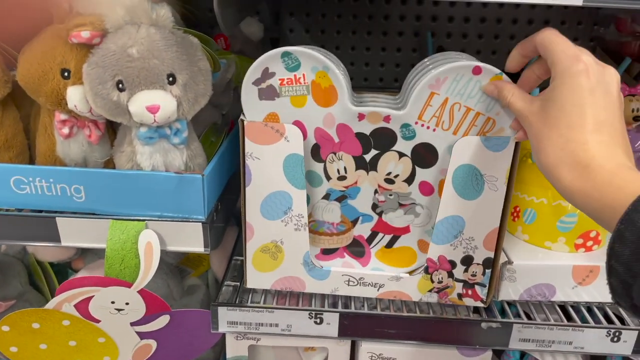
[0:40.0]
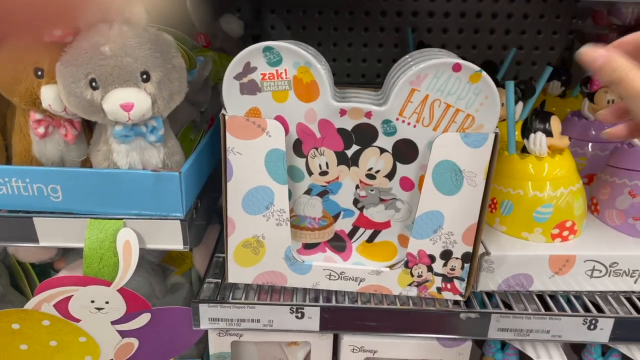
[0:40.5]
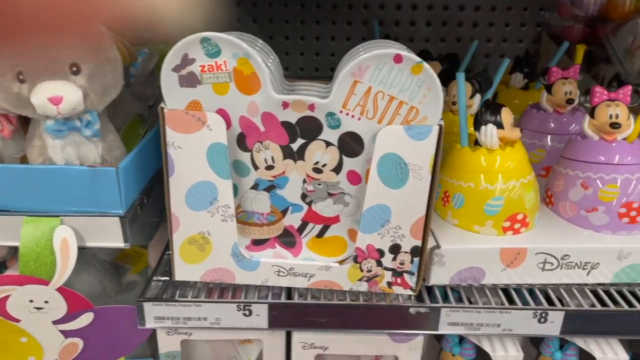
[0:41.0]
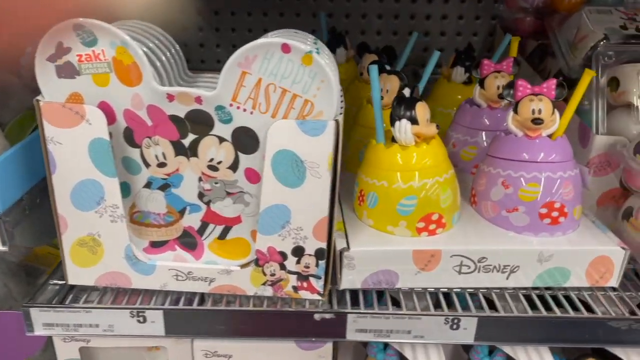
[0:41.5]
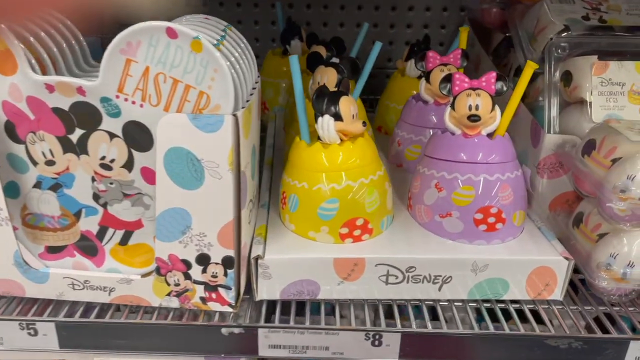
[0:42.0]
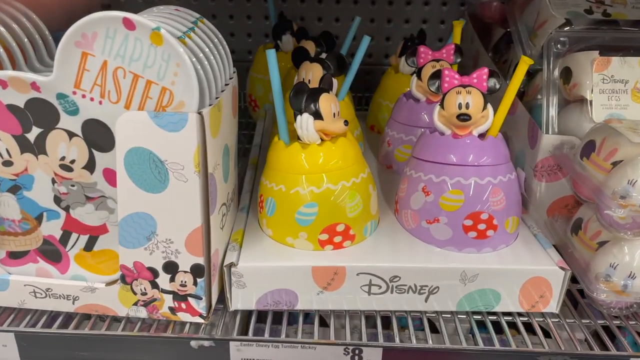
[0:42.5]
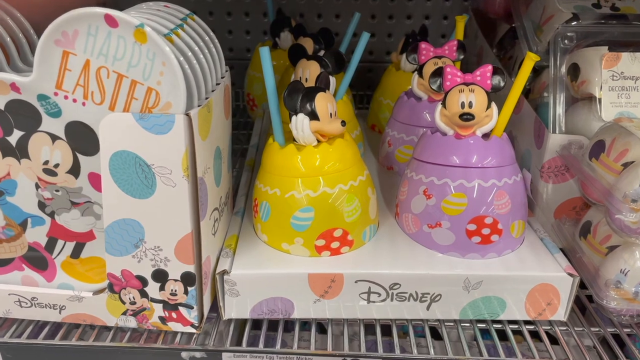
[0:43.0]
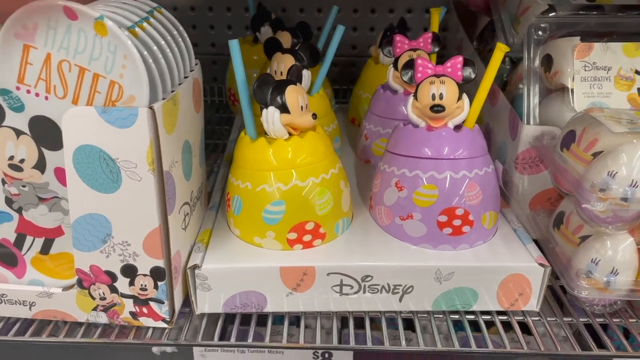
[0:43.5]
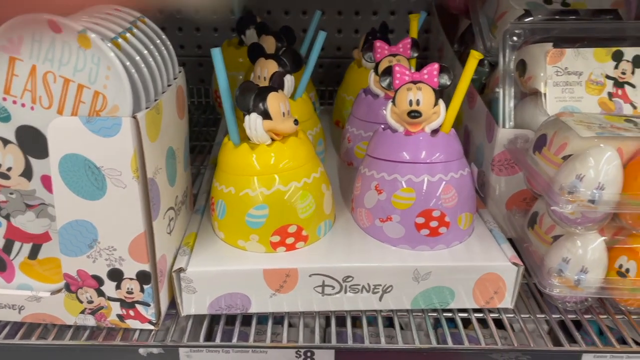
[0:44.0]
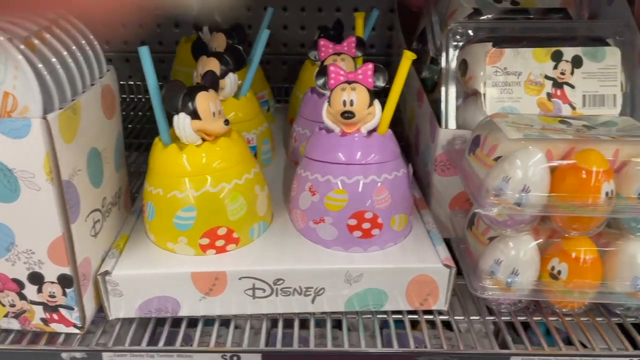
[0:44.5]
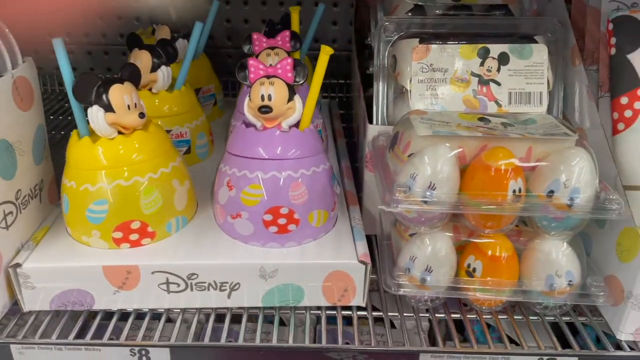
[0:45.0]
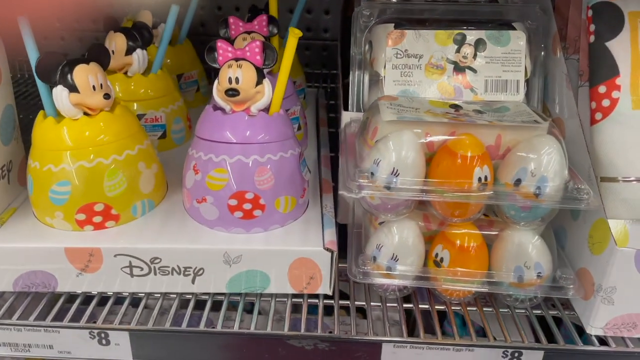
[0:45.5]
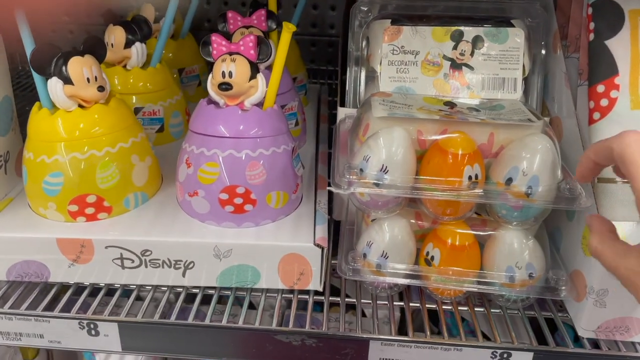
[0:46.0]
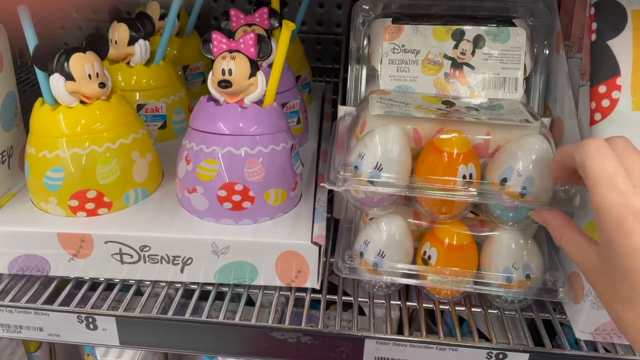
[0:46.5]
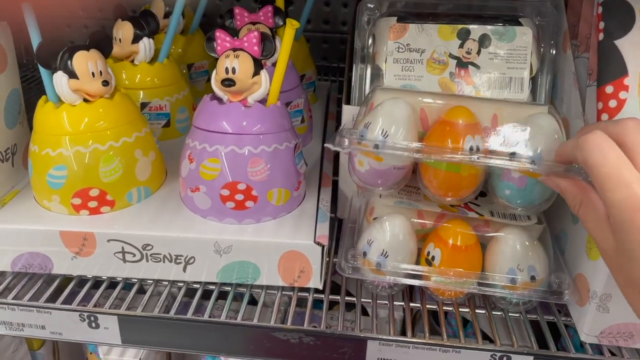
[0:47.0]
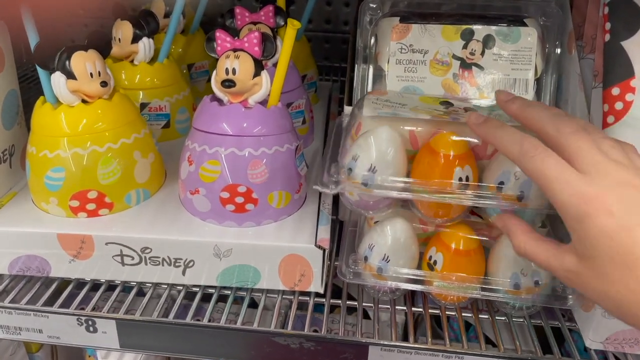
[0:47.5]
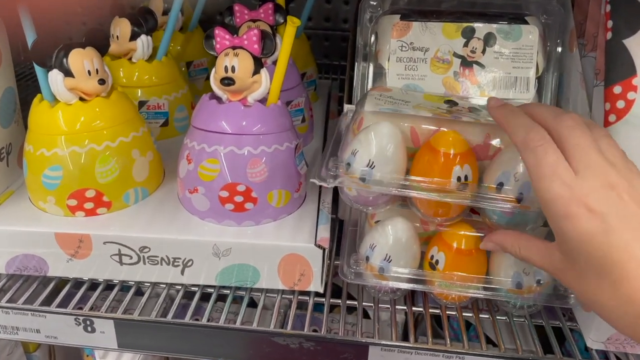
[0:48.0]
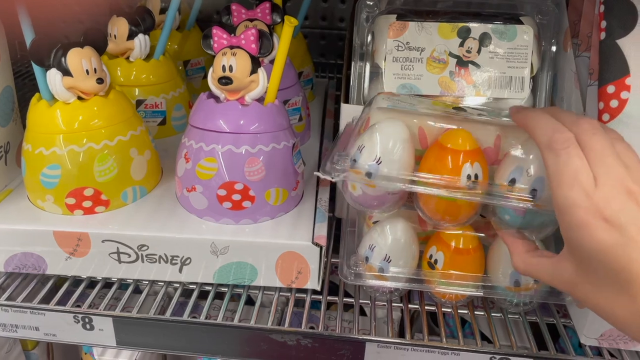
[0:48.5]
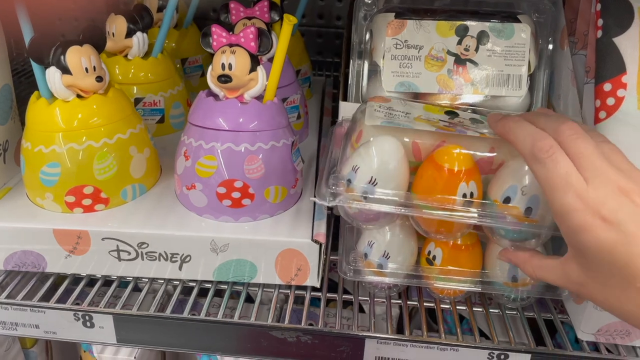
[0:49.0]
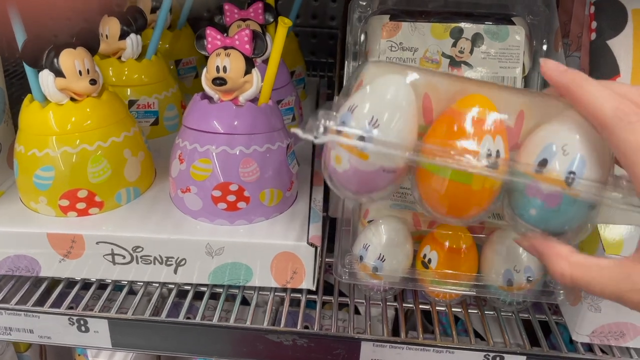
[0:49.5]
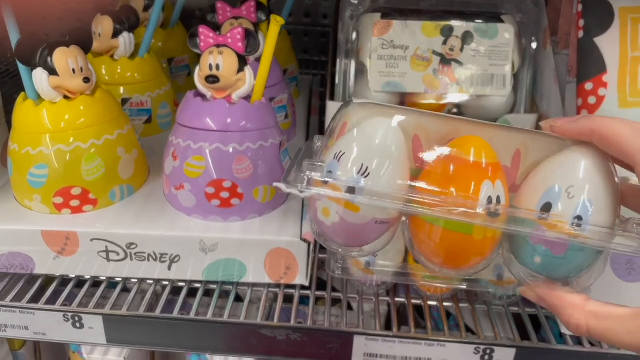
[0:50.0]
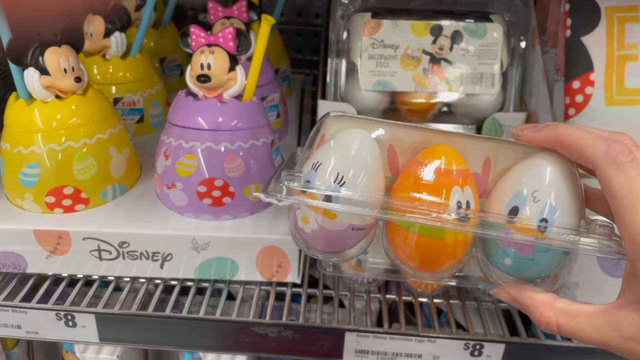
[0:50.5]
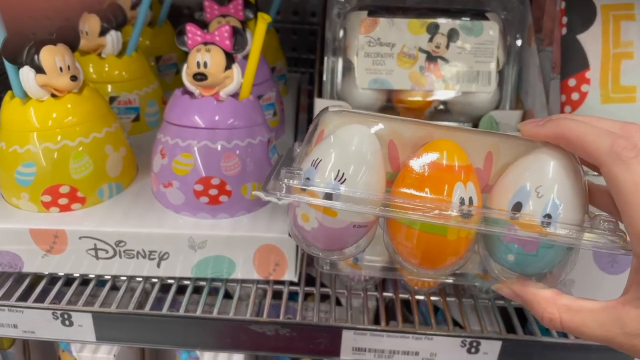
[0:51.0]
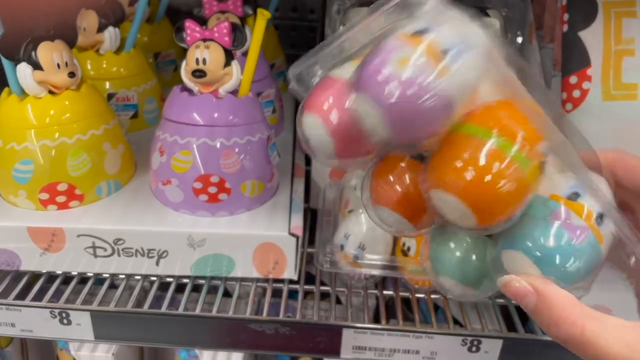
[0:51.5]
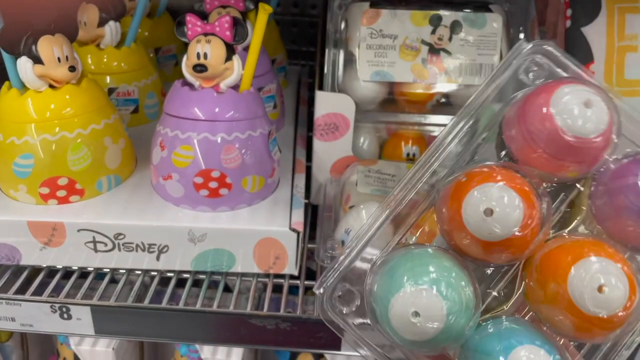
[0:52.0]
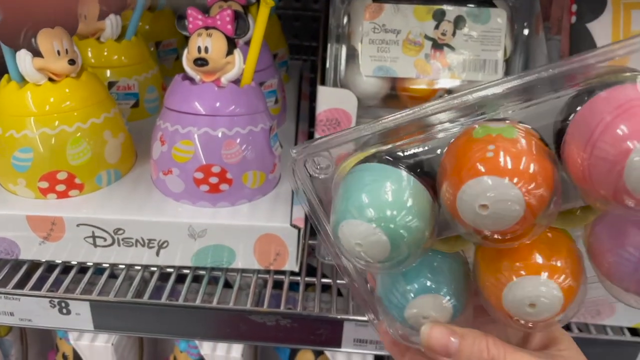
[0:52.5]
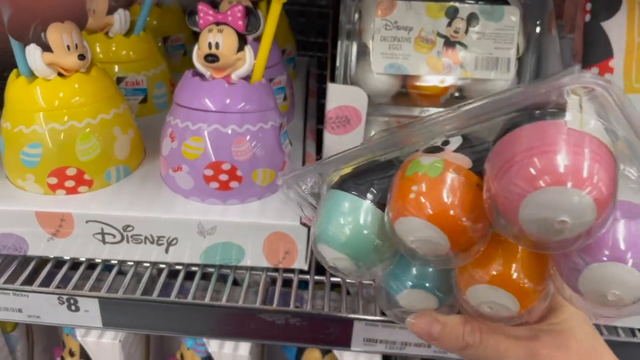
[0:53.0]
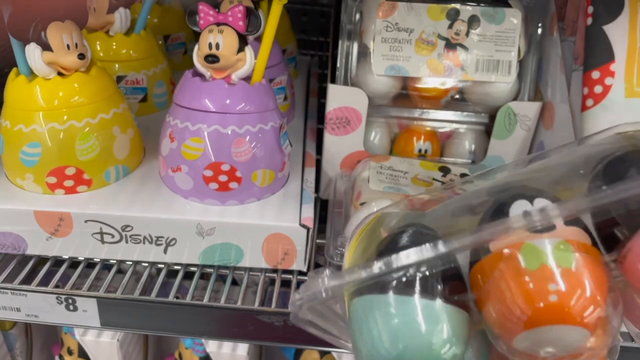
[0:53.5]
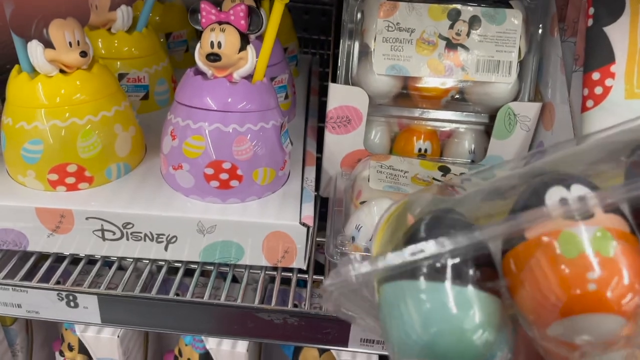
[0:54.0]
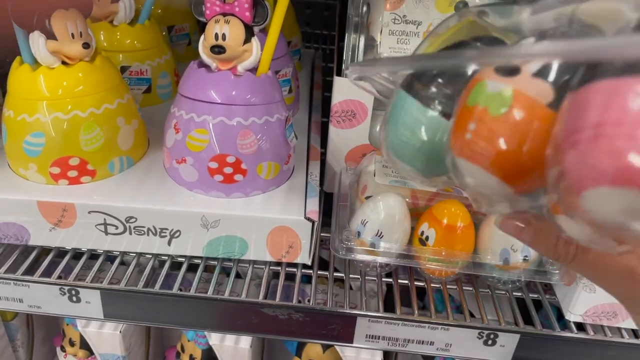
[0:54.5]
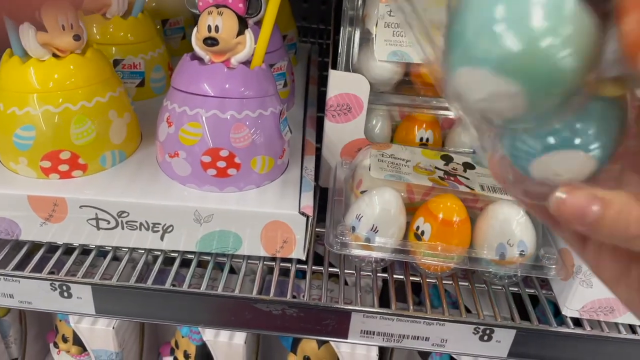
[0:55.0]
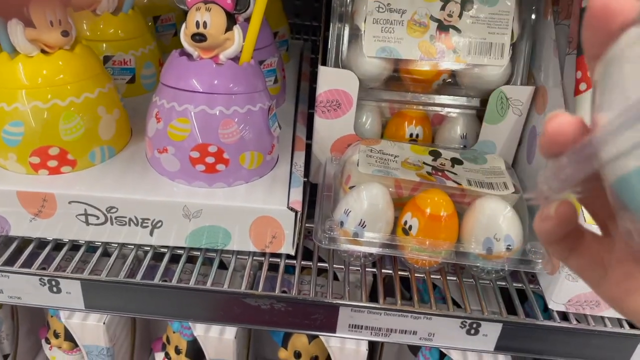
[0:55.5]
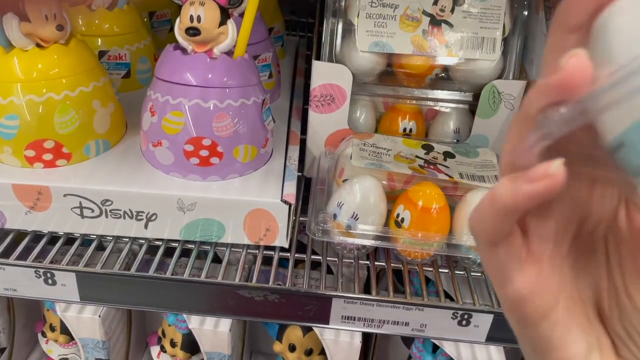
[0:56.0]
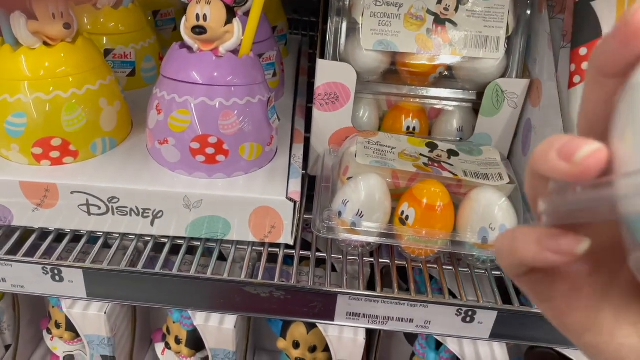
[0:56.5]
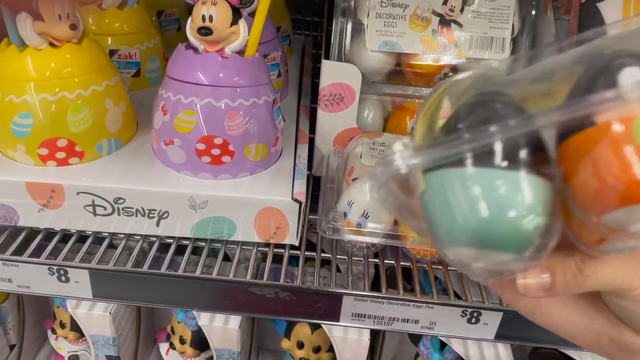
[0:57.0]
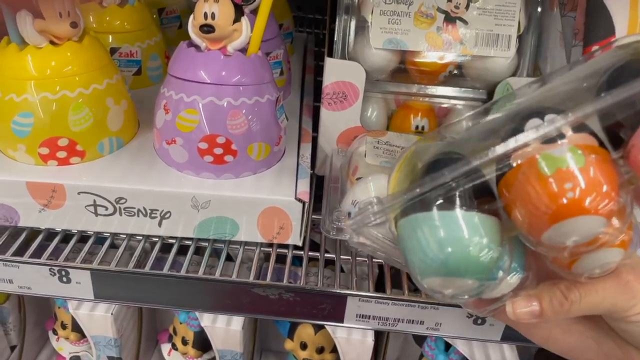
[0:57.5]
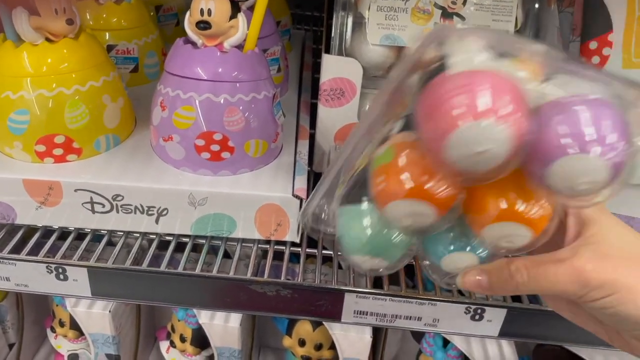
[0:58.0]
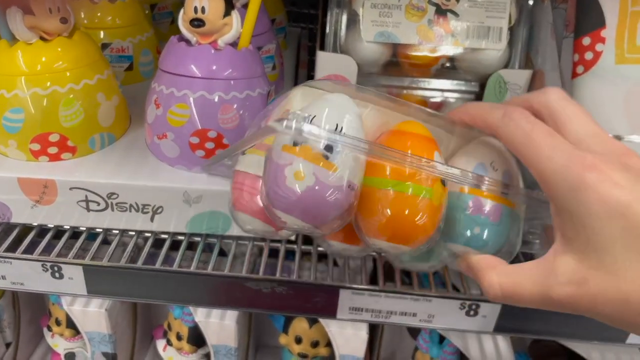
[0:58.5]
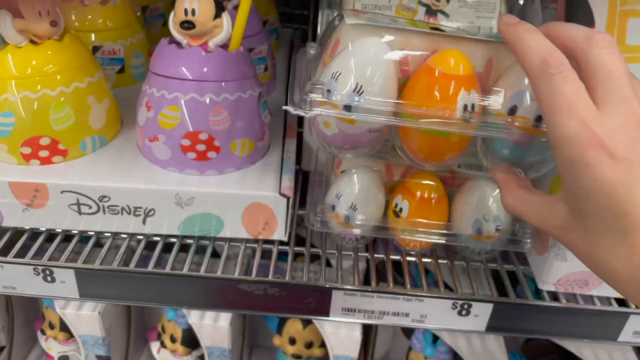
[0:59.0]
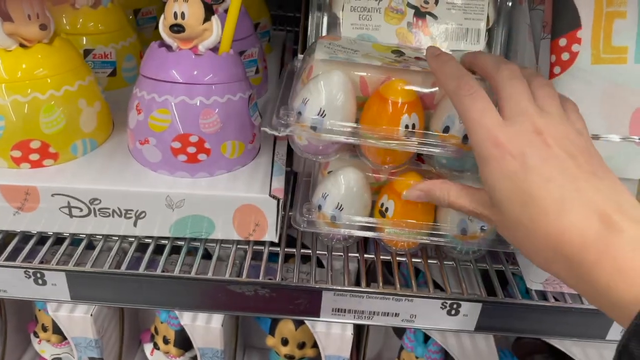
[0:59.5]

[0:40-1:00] The video continues with more Disney products, including Easter egg-design items with eggs and a female and a male Mickey Mouse popping out, as well as Easter egg-themed eggs that possibly contain Disney-themed prizes inside. The products feature various Disney characters, including a female Mickey Mouse, Miss Mickey, and some small duck characters. Near the end, a person's hand picks up one of these products and looks it over, moving it around. The person is possibly wearing a black shirt, as black sleeves are visible. The setting remains the toy aisle with the Disney Easter-themed products.